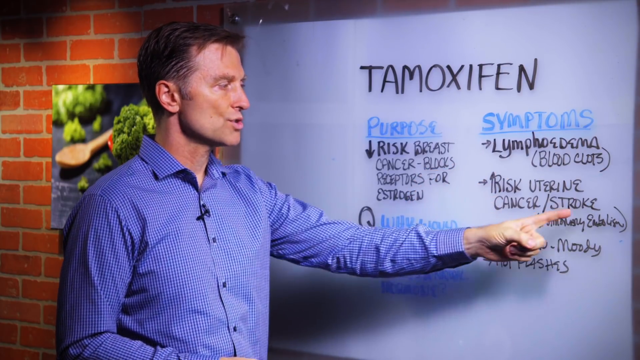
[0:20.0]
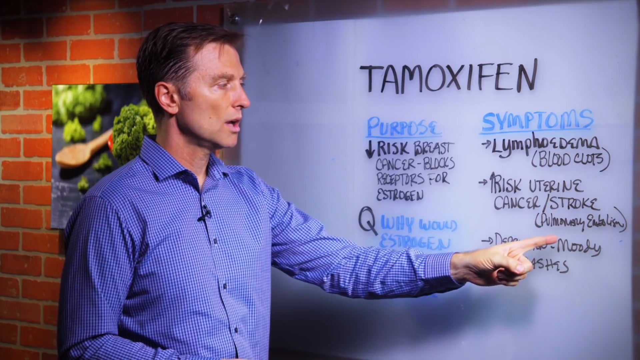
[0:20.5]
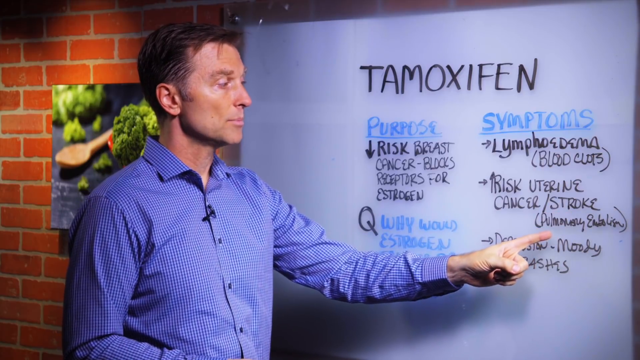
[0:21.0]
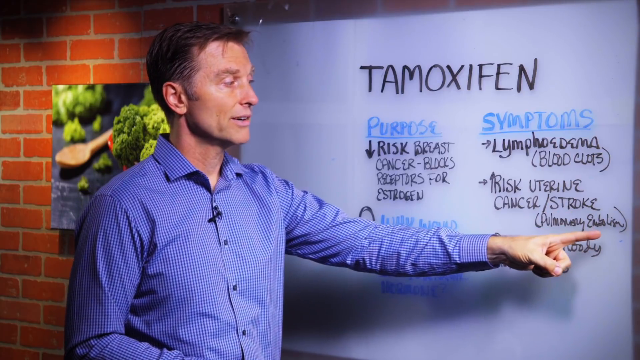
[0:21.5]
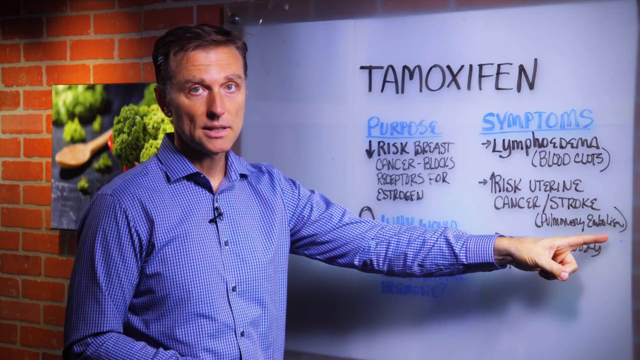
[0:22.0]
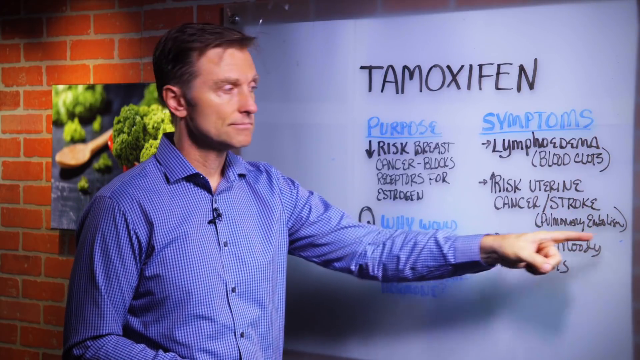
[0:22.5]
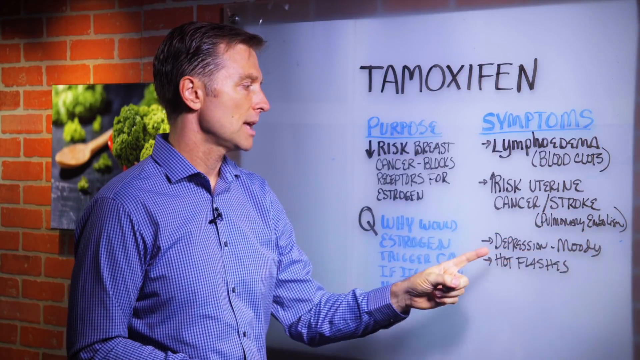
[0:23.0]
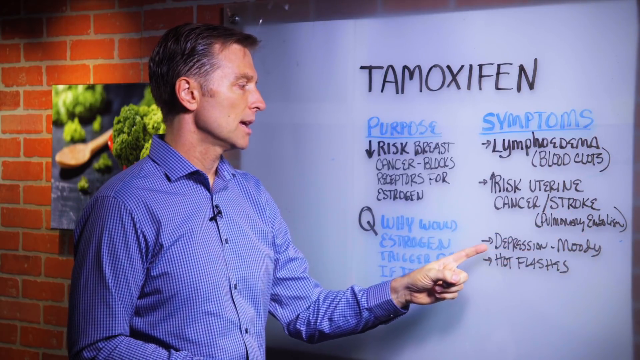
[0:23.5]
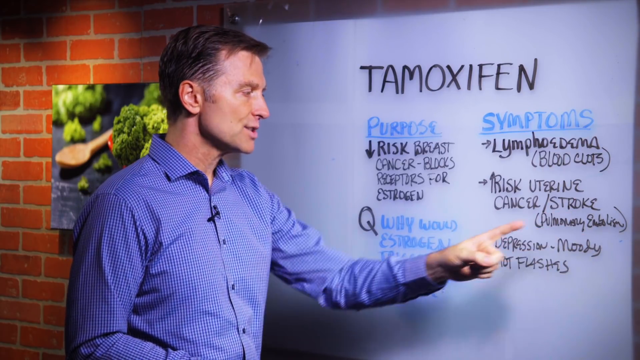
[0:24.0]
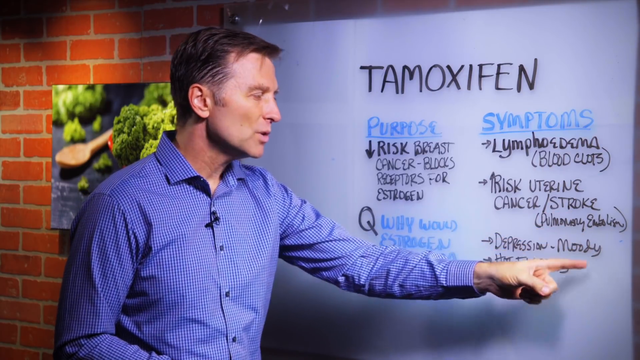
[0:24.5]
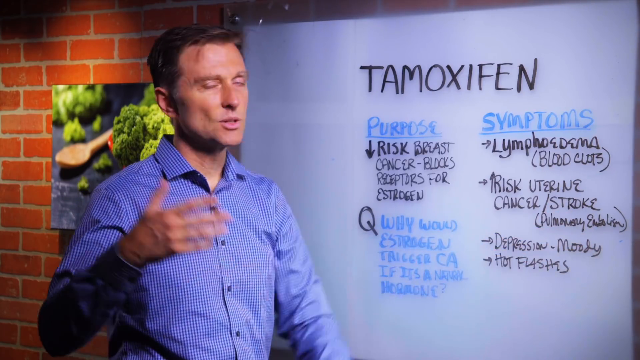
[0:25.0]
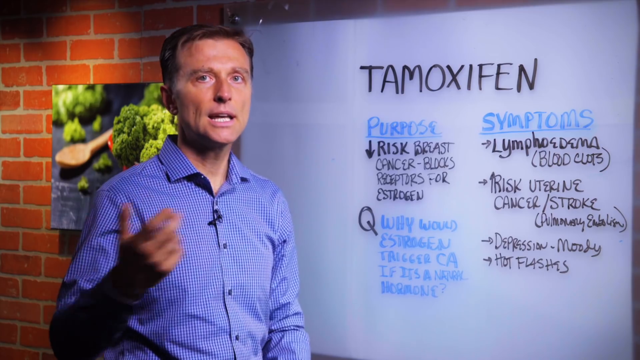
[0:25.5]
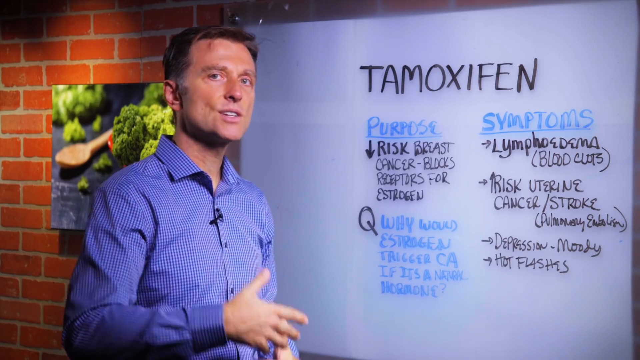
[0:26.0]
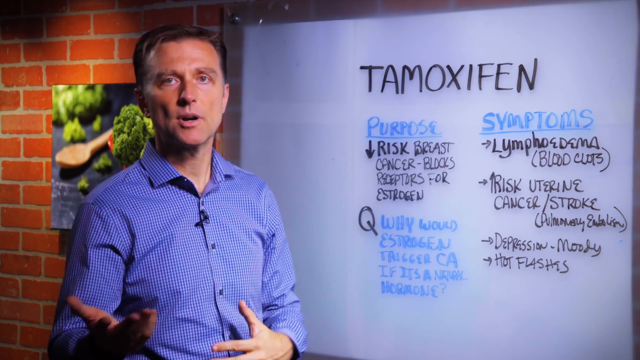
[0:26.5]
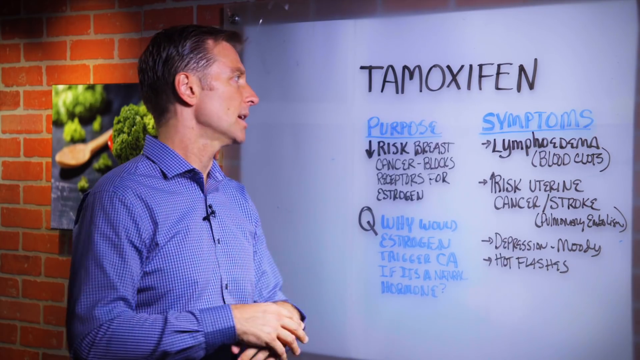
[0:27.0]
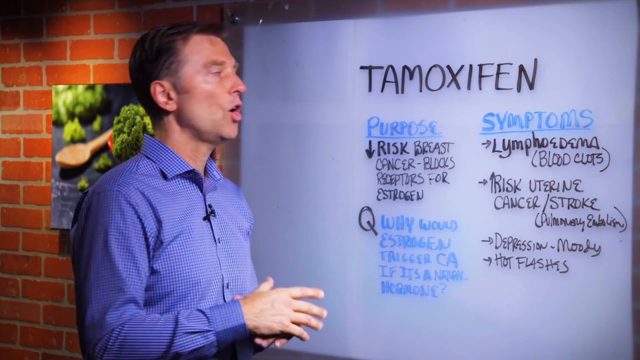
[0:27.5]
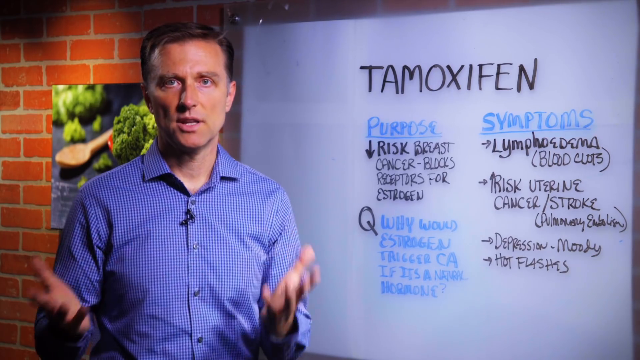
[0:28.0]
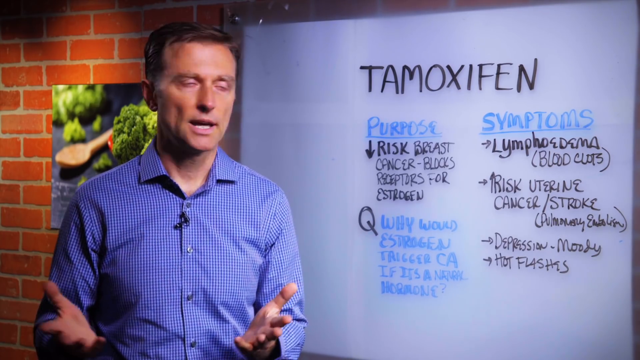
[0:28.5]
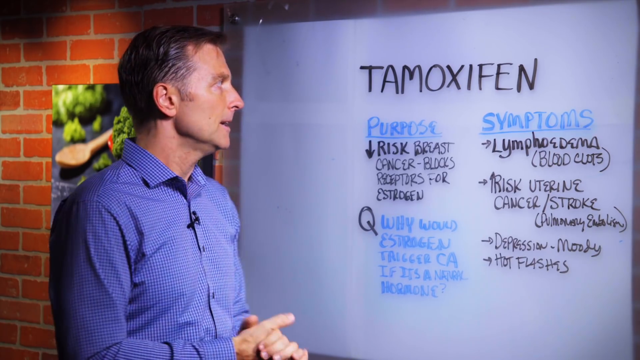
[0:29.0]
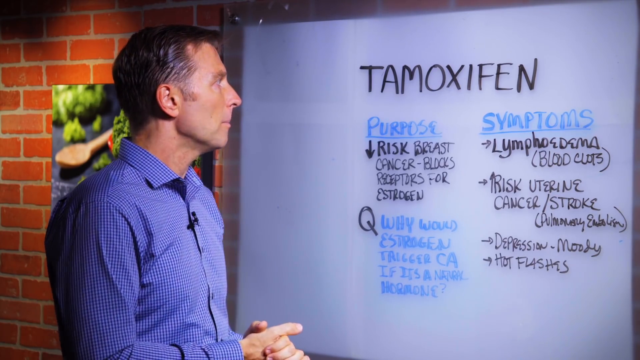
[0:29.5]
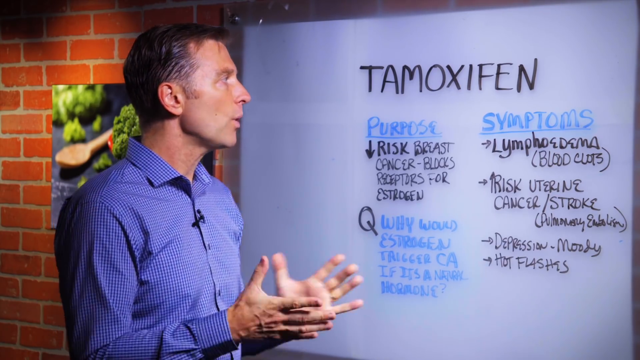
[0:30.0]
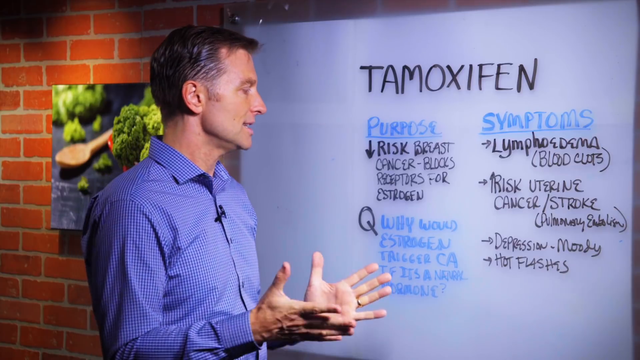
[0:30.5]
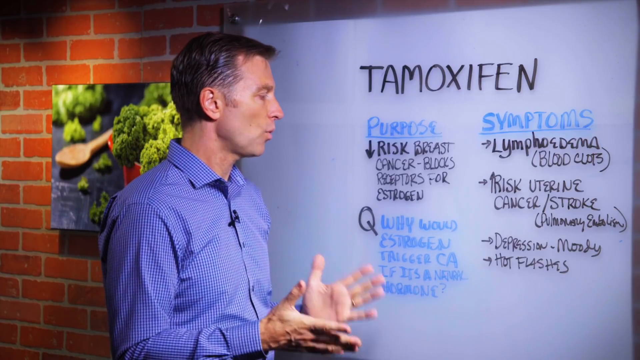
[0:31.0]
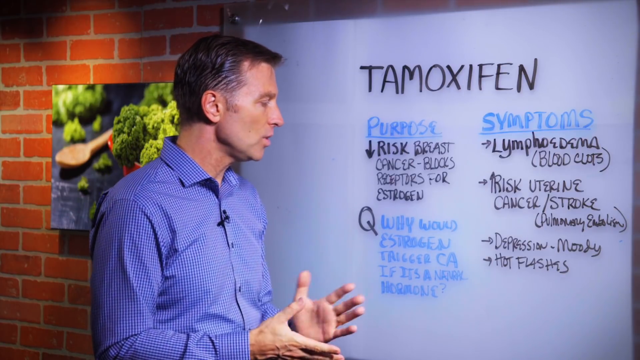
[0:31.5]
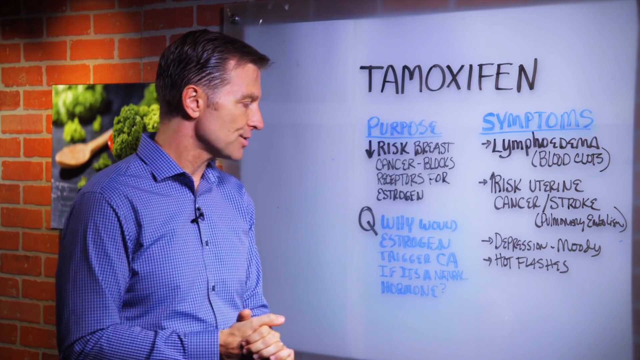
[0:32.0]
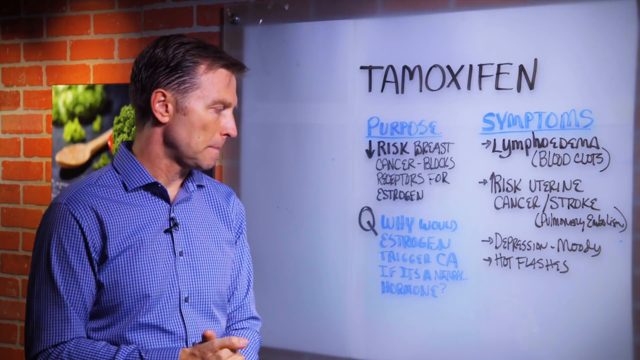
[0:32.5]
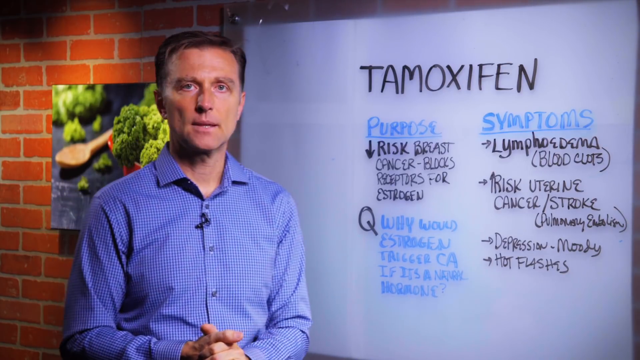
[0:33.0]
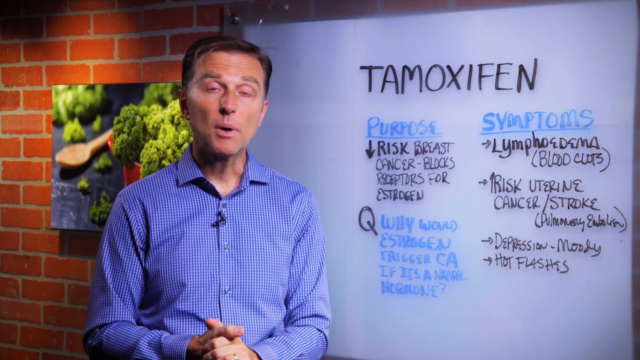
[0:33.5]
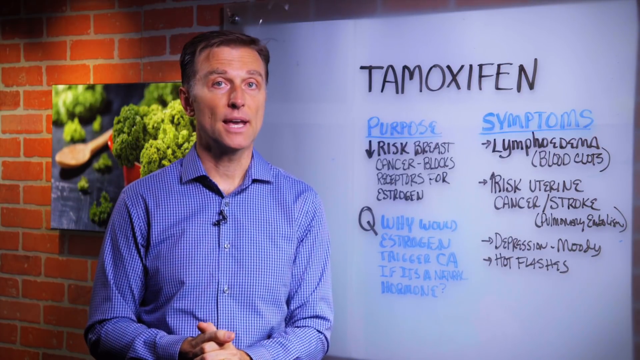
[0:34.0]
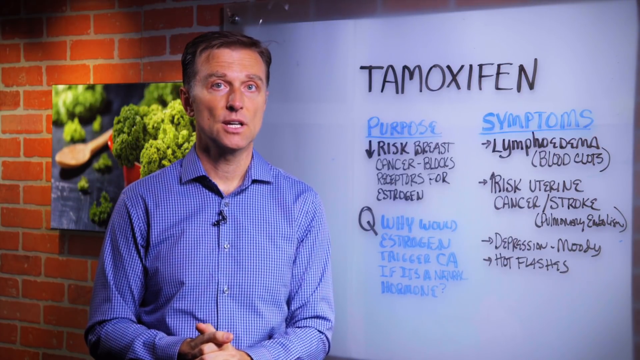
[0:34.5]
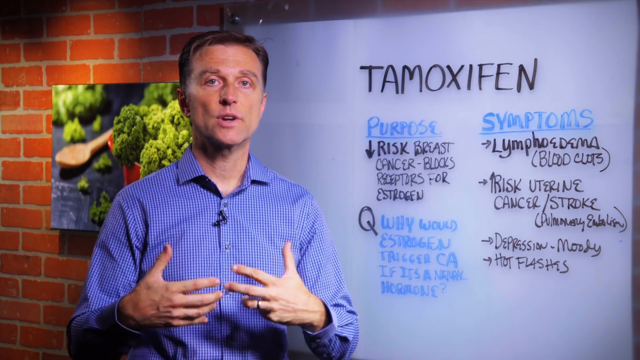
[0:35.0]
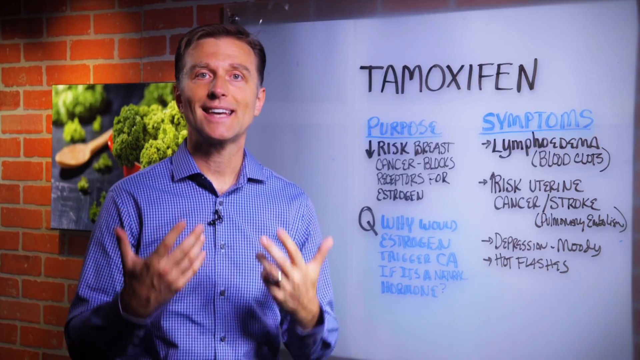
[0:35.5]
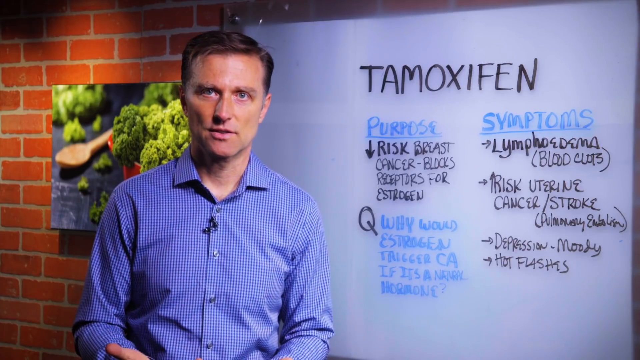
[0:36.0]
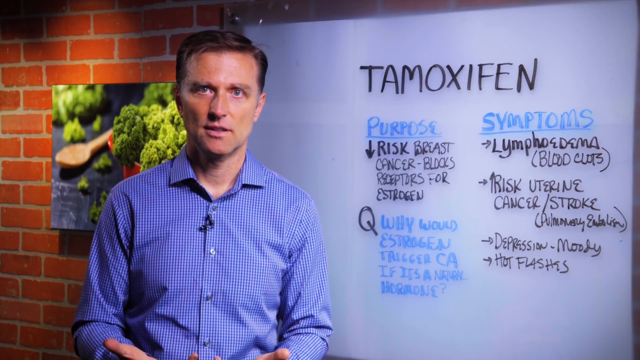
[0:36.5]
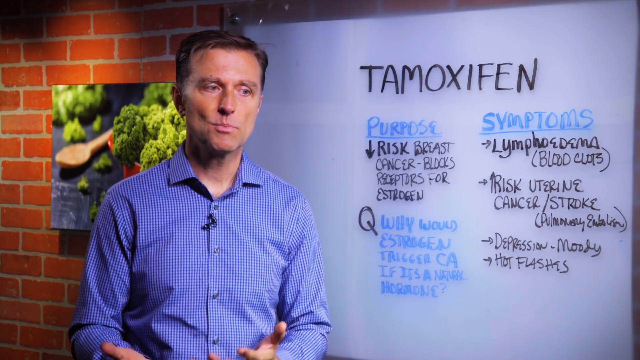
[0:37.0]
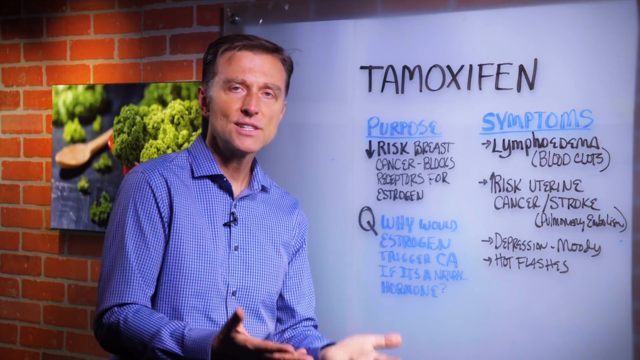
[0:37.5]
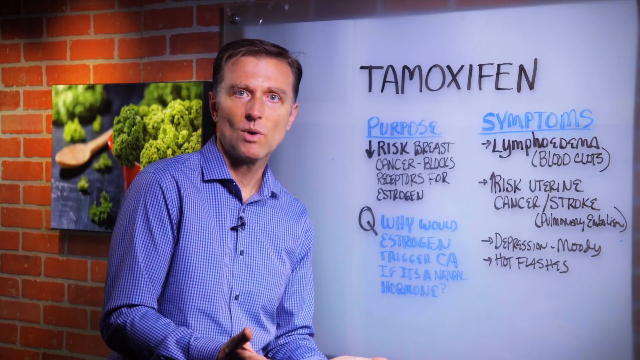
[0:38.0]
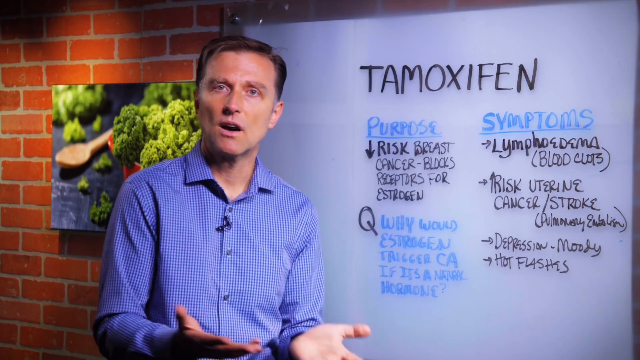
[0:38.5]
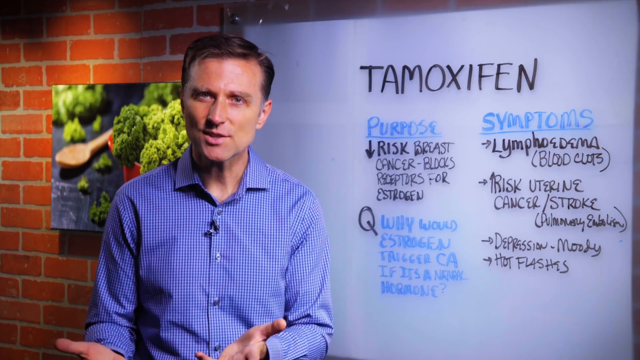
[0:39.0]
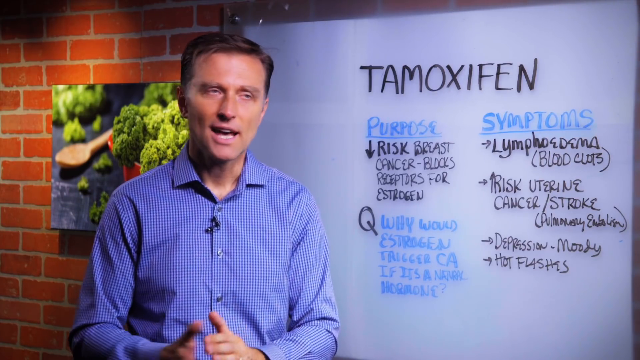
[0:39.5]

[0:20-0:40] The man wears an Oxford shirt in blue and gray or white with a very small checkered pattern. He points to words on a whiteboard that says "tamoxifen", at this moment to "cancer, stroke, pulmonary embolism, depression, moody, hot flashes", which are under the word "symptoms". He uses his hands a lot as he talks. Other words on the board behind him read "purpose, reduce the risk of breast cancer, blocks receptors for estrogen" and "question, why would someone try to block a normal hormone?", with nothing written on the board in answer. Farther back, on a brick wall, is a photo of a whole lot of broccoli on what looks like a black granite tabletop, with a wooden spoon.